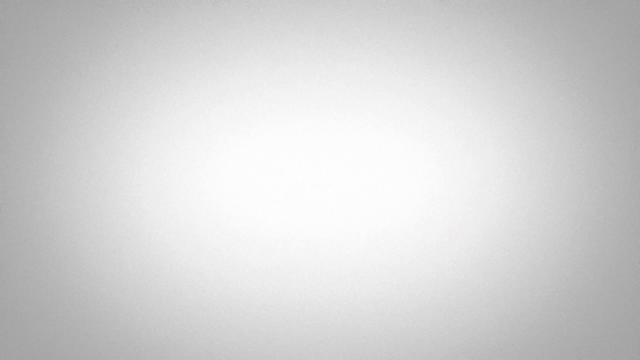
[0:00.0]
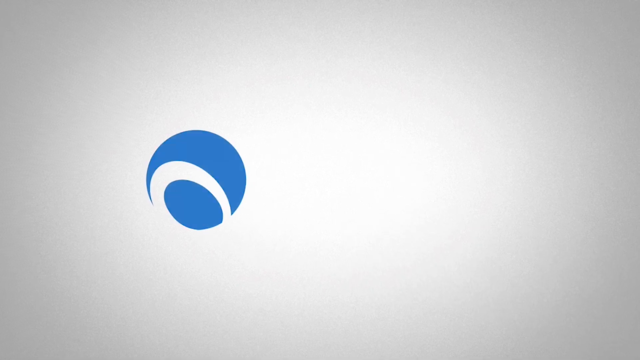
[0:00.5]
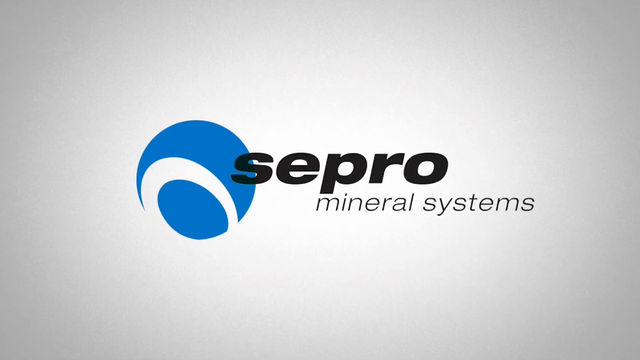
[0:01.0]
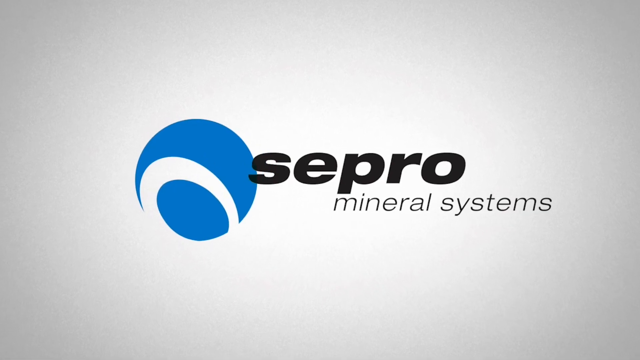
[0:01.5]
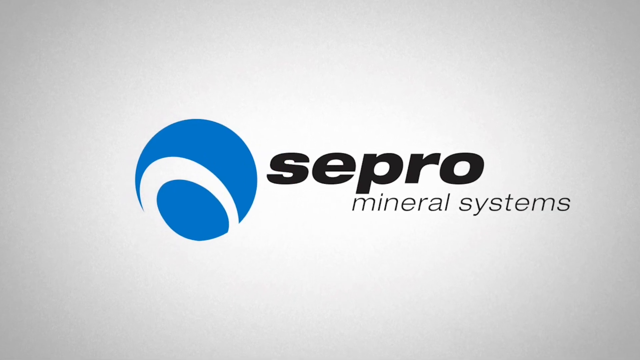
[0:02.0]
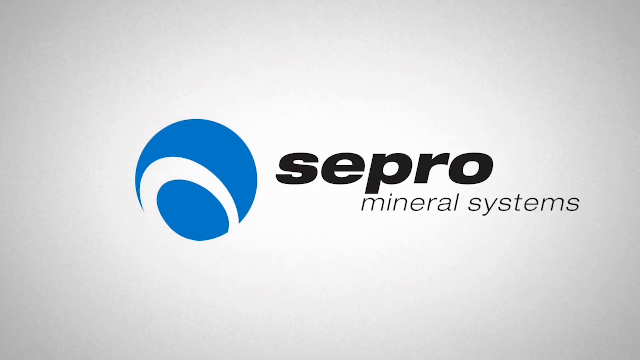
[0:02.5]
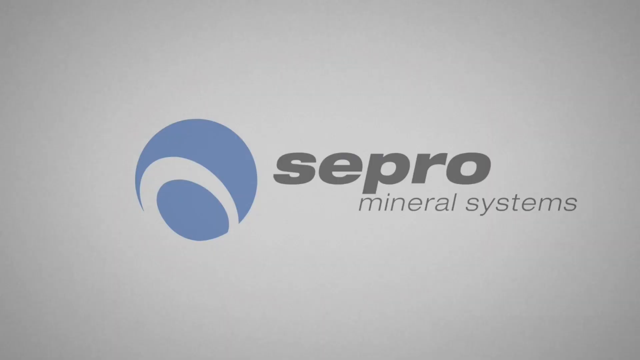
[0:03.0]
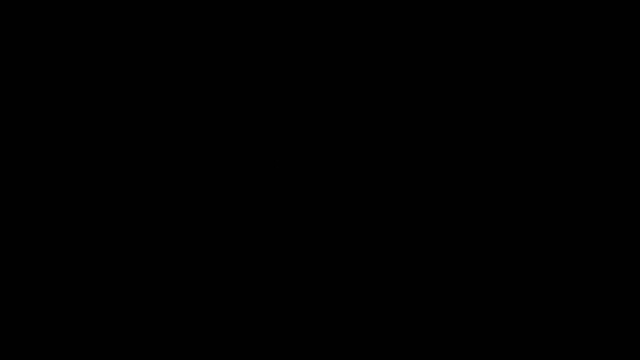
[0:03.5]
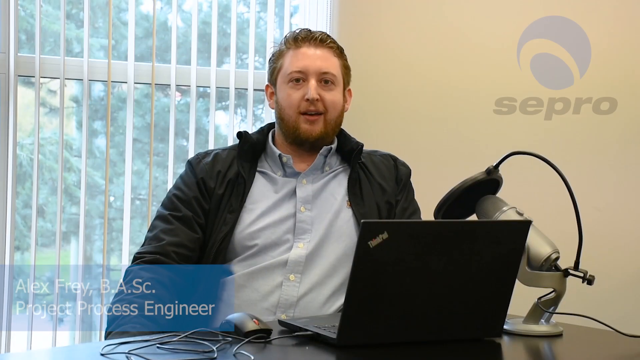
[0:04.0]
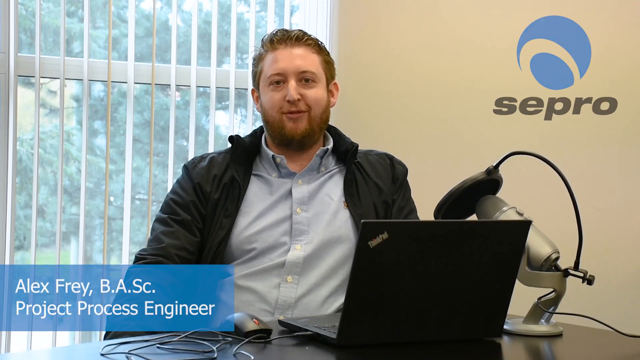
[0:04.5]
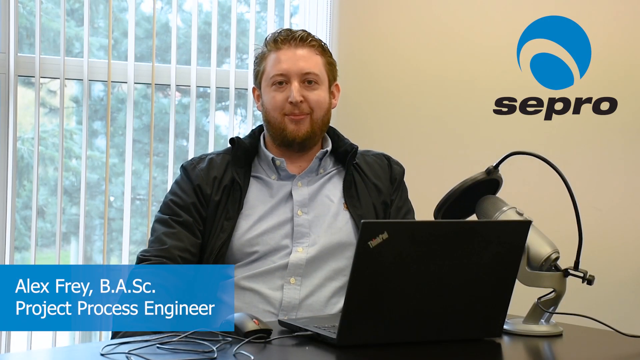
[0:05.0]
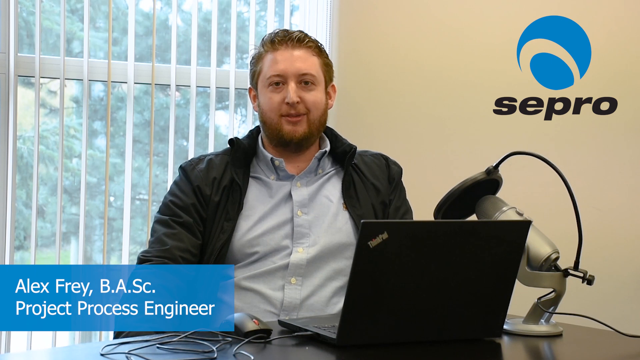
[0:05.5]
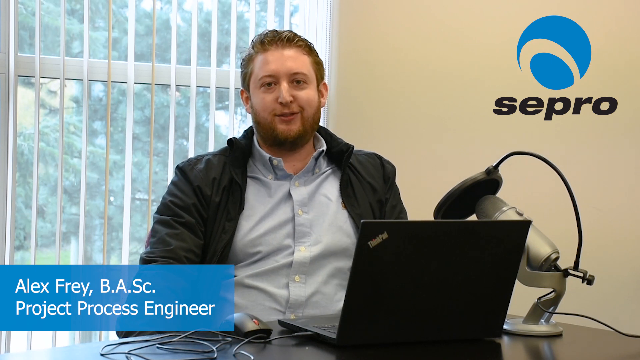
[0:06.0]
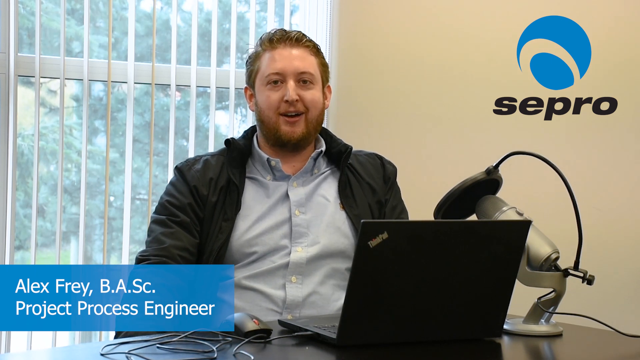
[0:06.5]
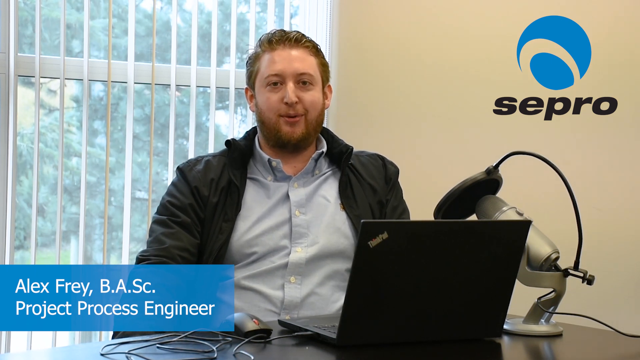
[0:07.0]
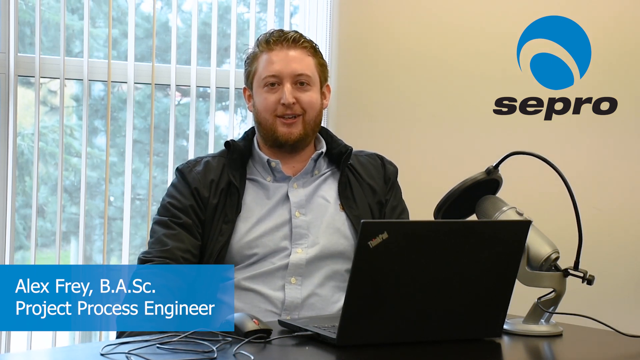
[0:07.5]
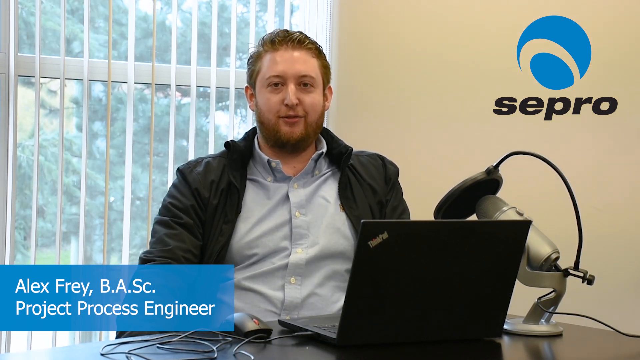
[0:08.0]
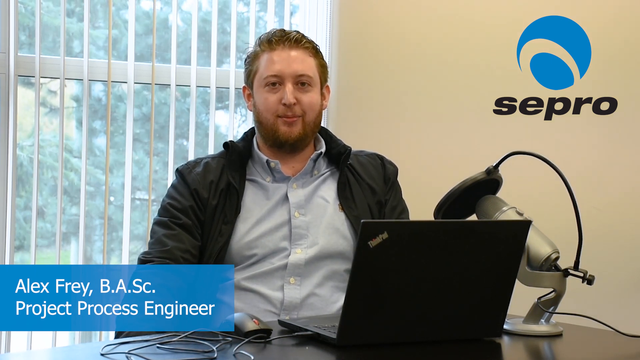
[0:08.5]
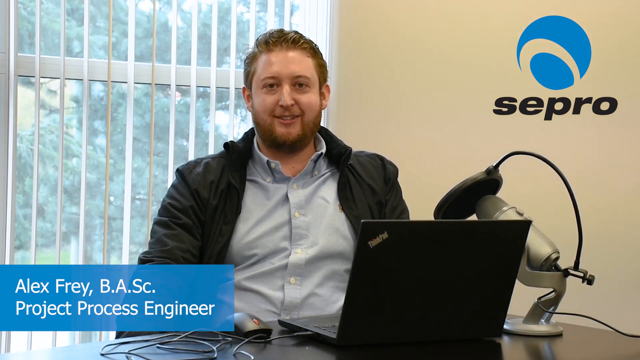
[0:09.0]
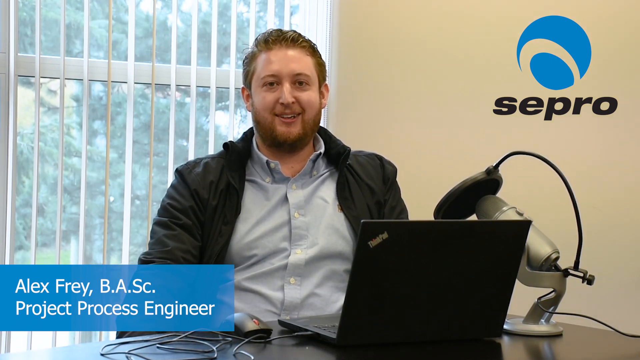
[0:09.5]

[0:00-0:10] An animation kind of bursts in from the bottom of the screen. A blue logo with a white circle or ring toward its bottom appears along with the text "Sepro mineral systems." That clicks off, and a man is shown sitting at a desk with a computer and a microphone. In the top right-hand corner is the Sepro logo followed by the name, and in the bottom left-hand corner is the text "Alex Bray BASC project process engineer." He has a cheerful look on his face and is beginning to talk, sitting at the desk.